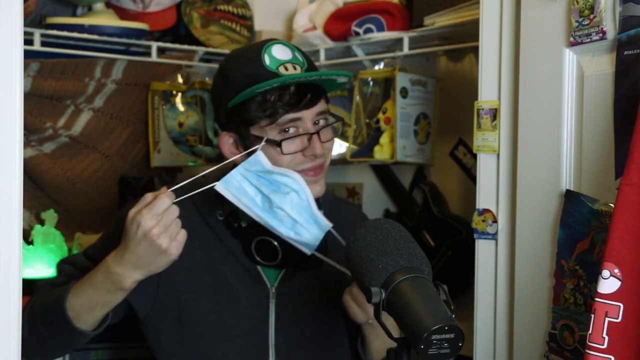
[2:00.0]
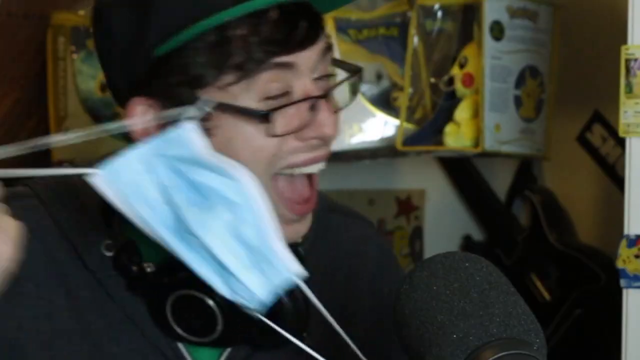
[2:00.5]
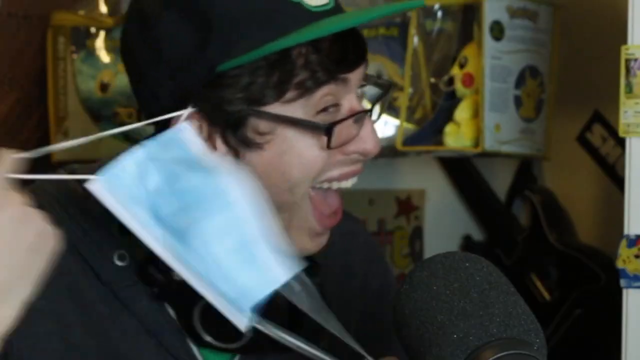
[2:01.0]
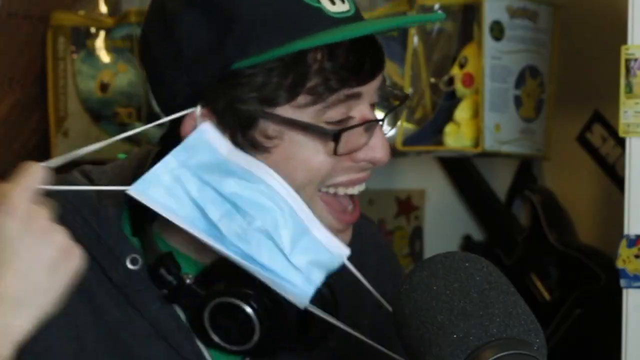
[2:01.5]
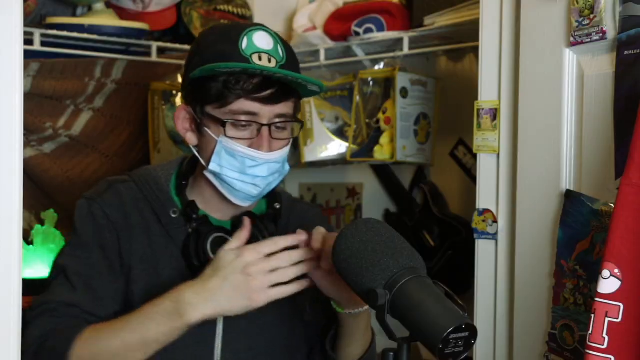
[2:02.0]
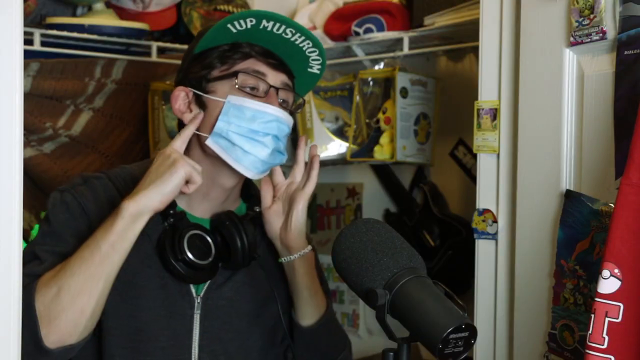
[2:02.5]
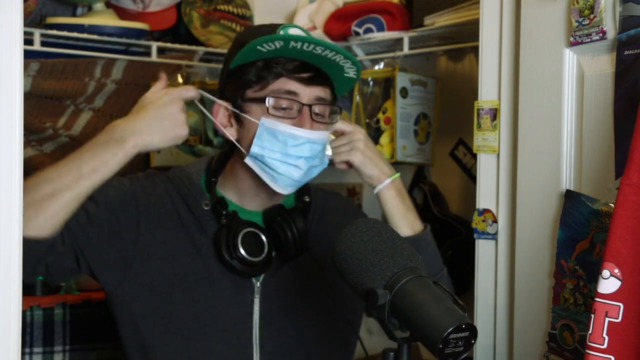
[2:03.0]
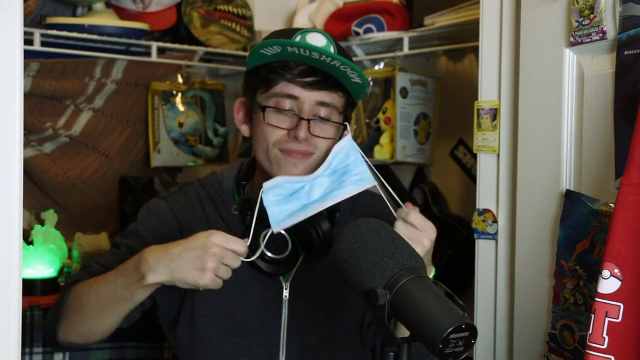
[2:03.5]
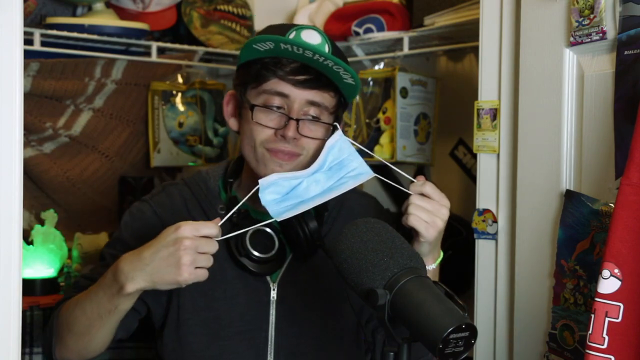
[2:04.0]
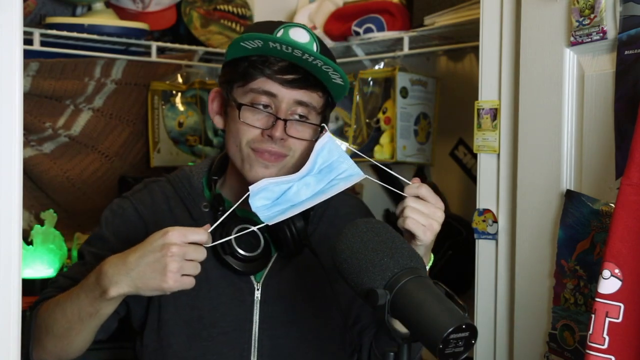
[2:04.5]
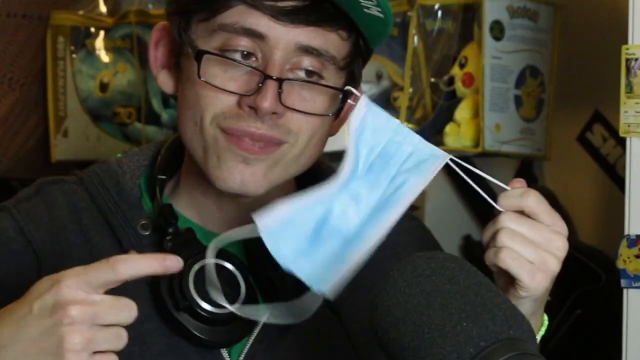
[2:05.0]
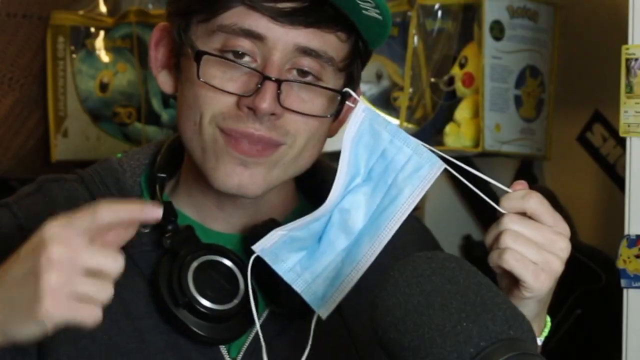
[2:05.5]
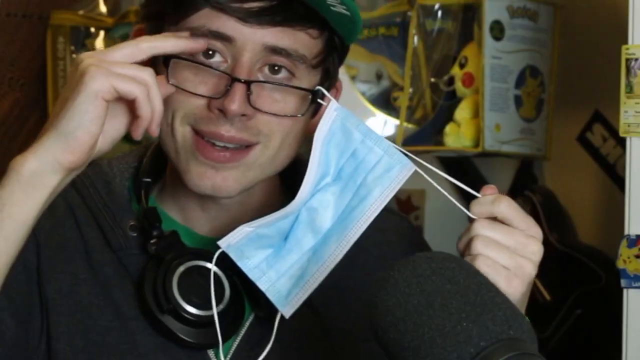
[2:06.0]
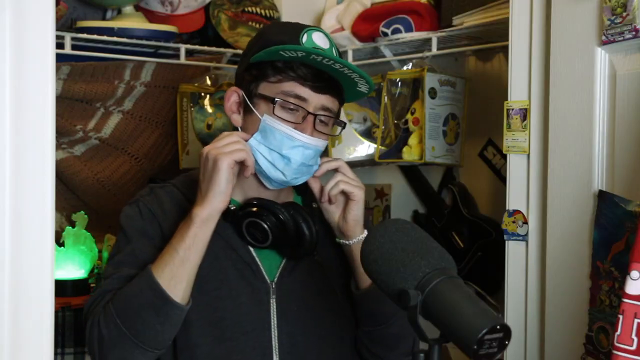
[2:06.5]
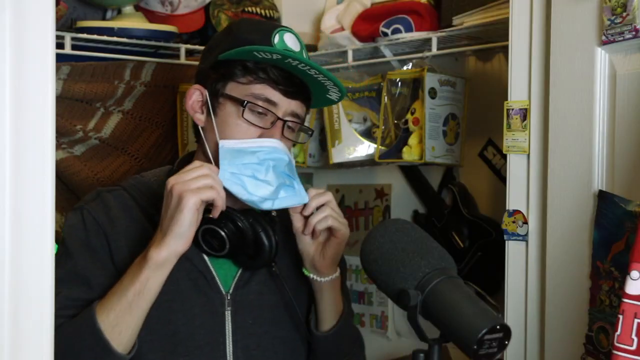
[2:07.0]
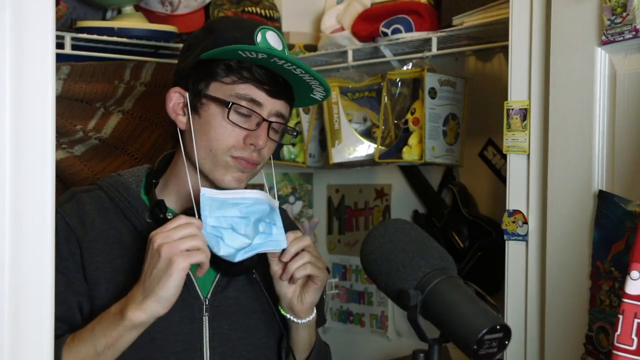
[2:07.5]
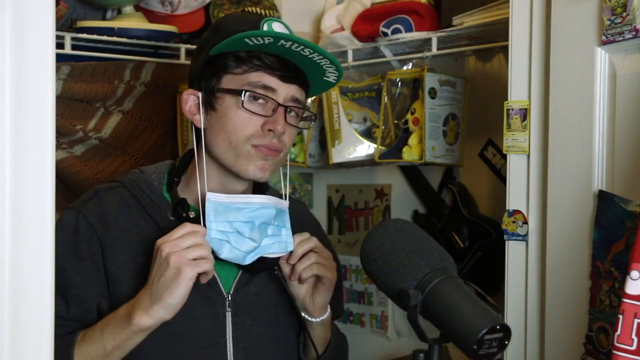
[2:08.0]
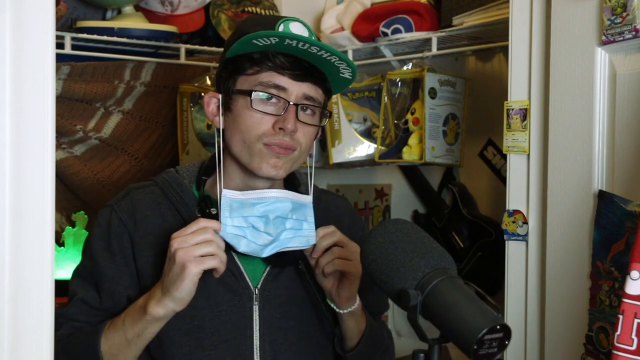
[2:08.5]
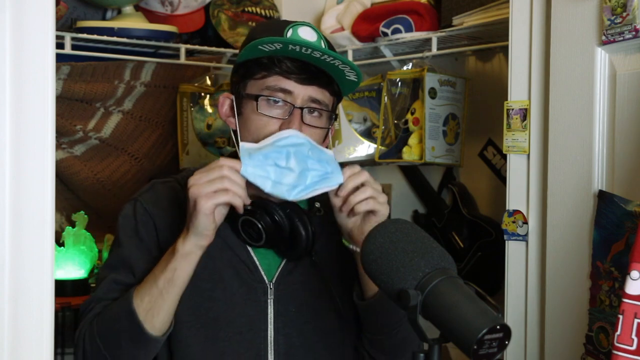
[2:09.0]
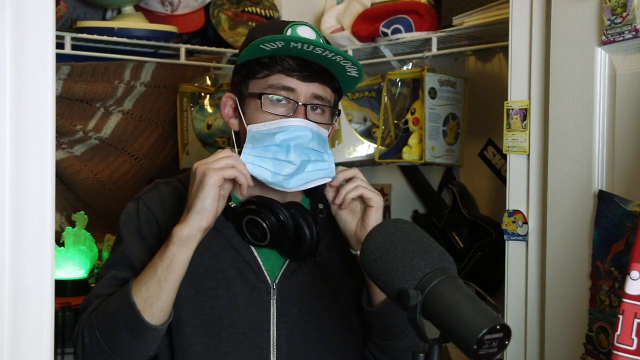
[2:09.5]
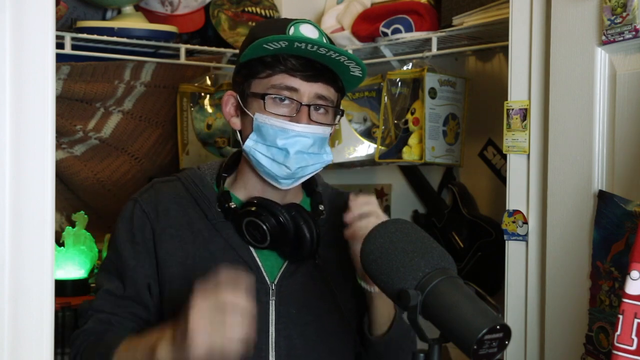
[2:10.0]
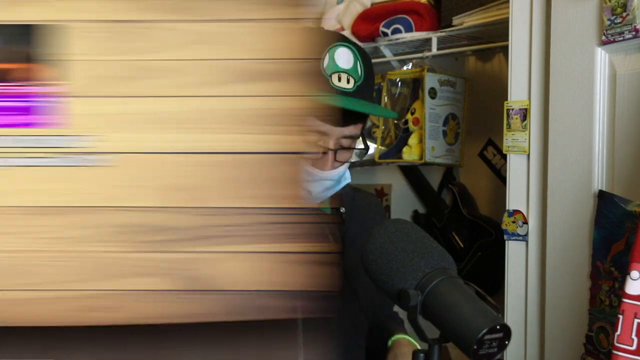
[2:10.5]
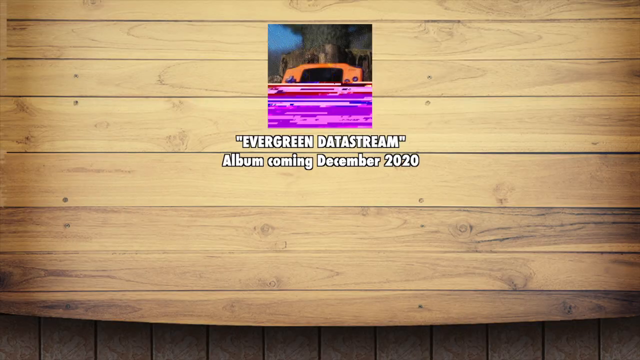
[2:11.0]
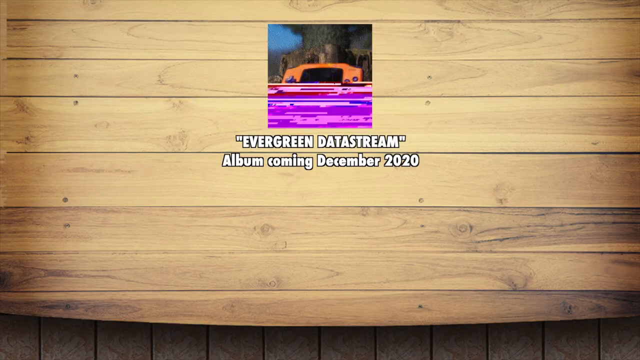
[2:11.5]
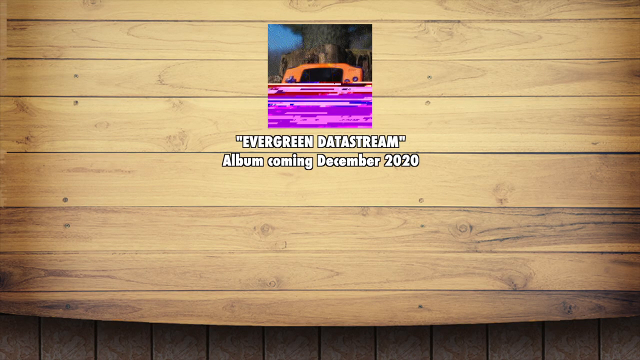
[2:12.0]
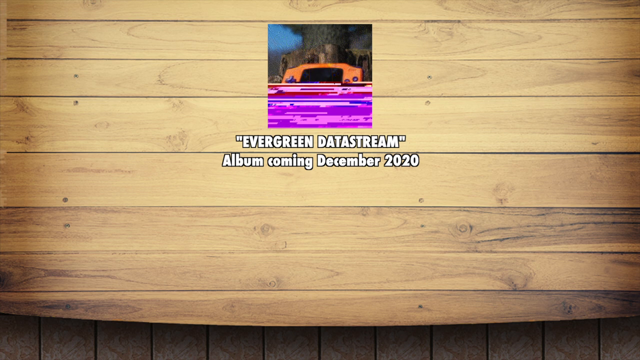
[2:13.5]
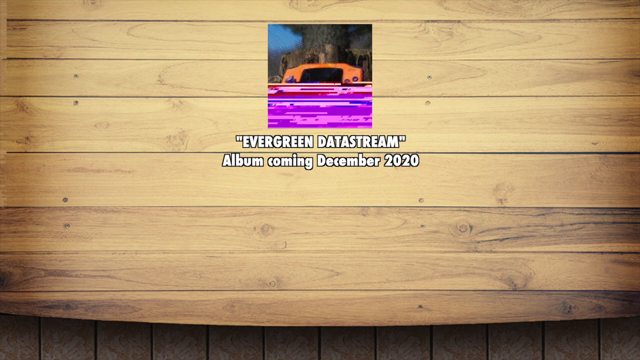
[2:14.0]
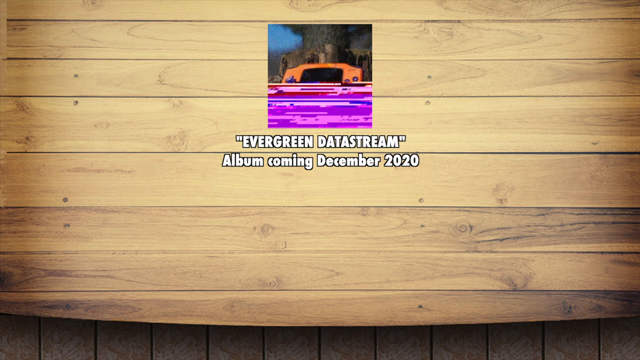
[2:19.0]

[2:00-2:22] As the man tries to remove his face mask, the ear loop gets stuck on his glasses. He tries to tug it off with his right hand, and it moves closer to his right ear but stays caught on his glasses. He makes a face as he laughs or screams, then tugs it with moderate force with his right hand before the screen changes and the man has the face mask on again. He tries to take it off, but this time the loop gets stuck on the left arm of his glasses. The camera zooms in on his face and he lets go of the mask with his right hand. The scene changes again with the mask back on his face; he pulls the mask down and off, but the loops are still on his ears, and he then brings the mask back up to his face. Finally the screen changes to a background of multiple wooden panels with an image at the top center, and under the image are the words "Evergreen datastrea" and "Album coming December 2020".